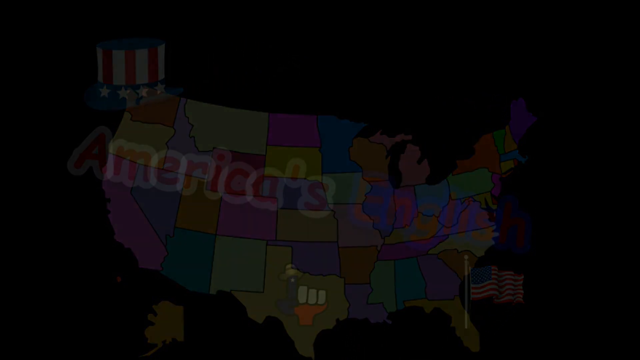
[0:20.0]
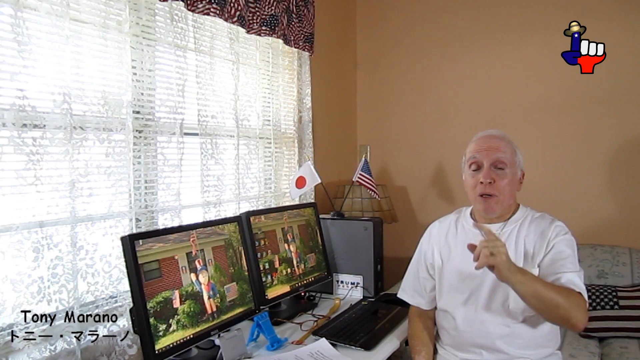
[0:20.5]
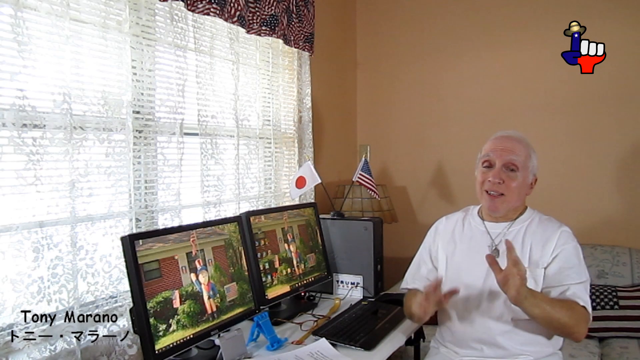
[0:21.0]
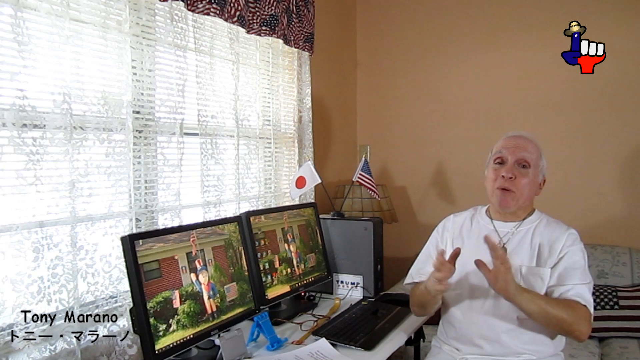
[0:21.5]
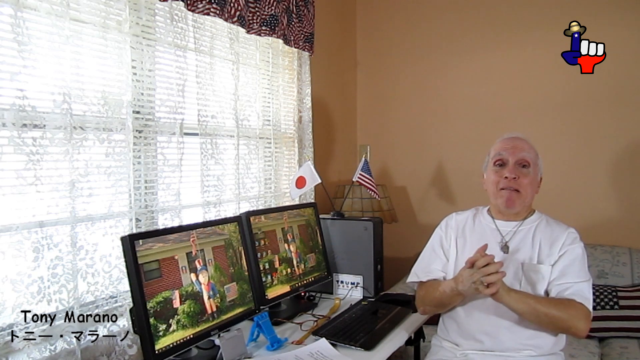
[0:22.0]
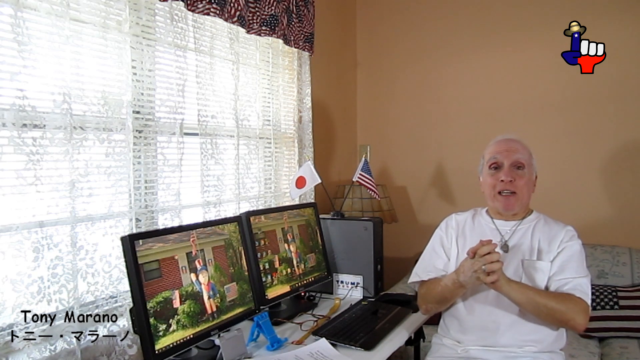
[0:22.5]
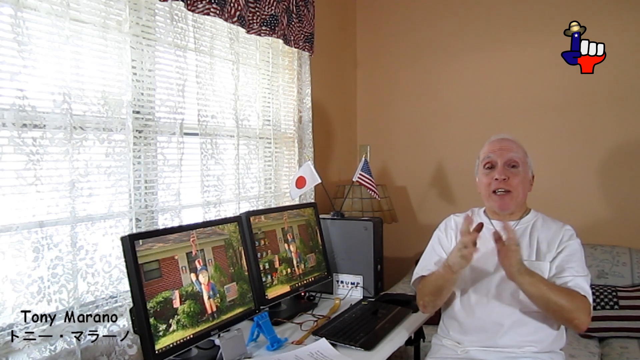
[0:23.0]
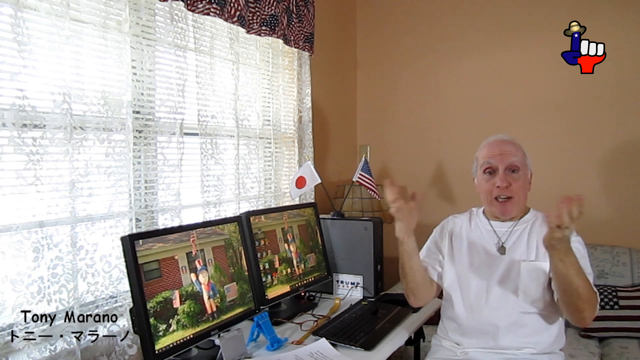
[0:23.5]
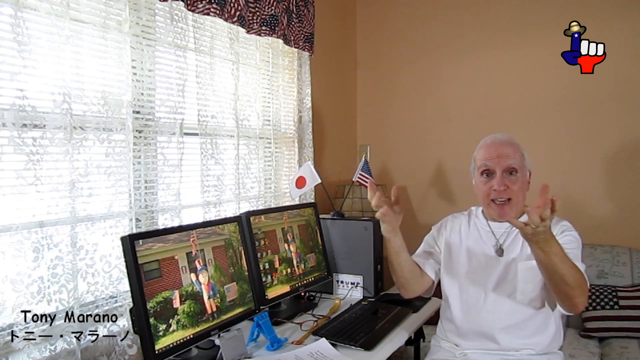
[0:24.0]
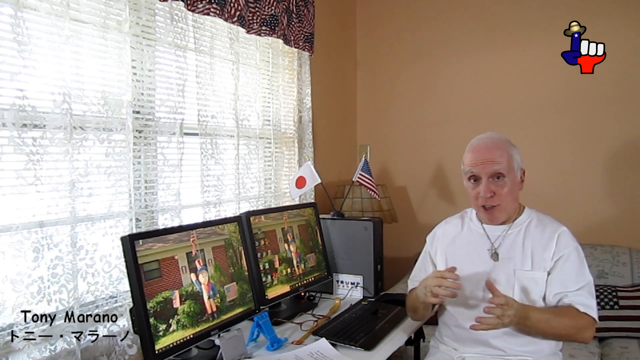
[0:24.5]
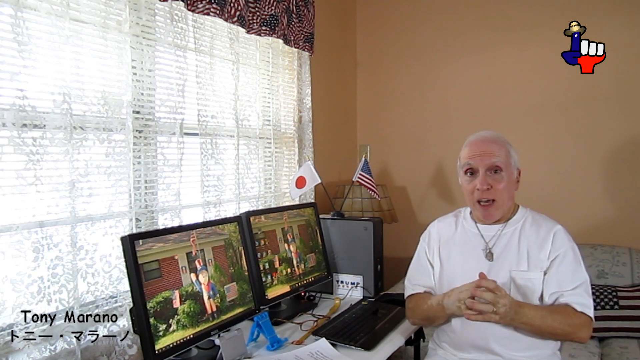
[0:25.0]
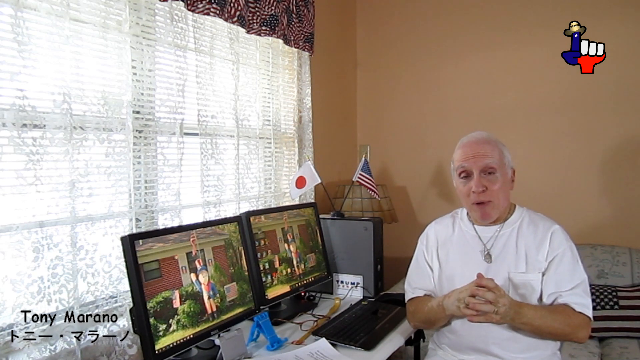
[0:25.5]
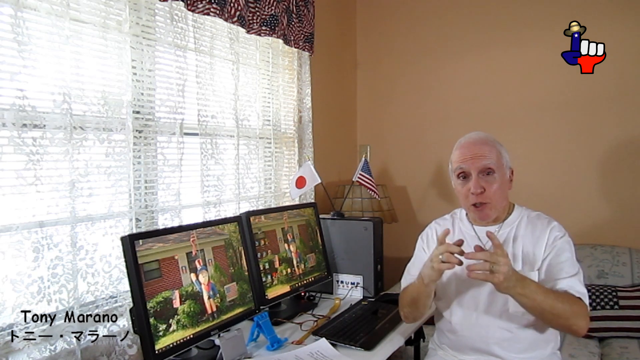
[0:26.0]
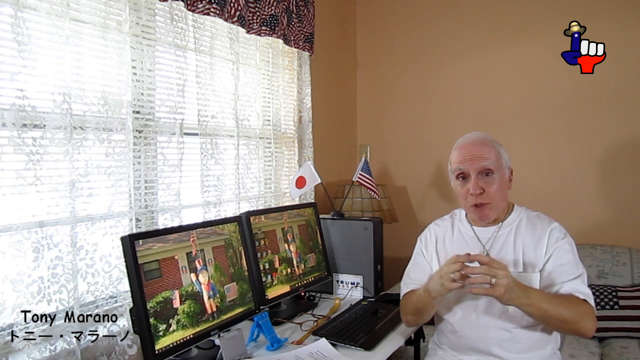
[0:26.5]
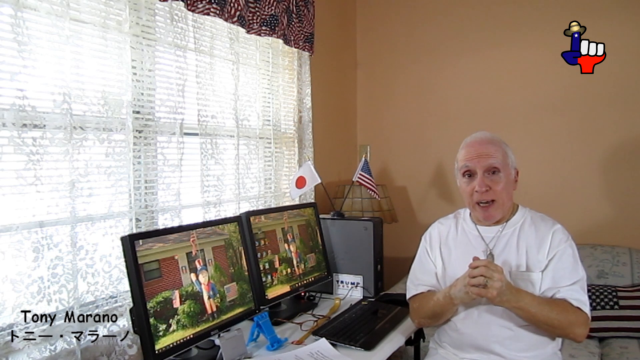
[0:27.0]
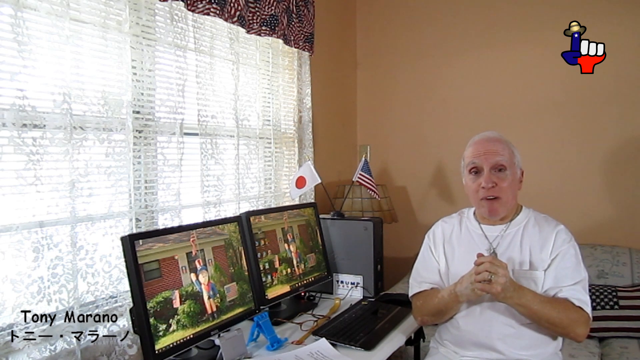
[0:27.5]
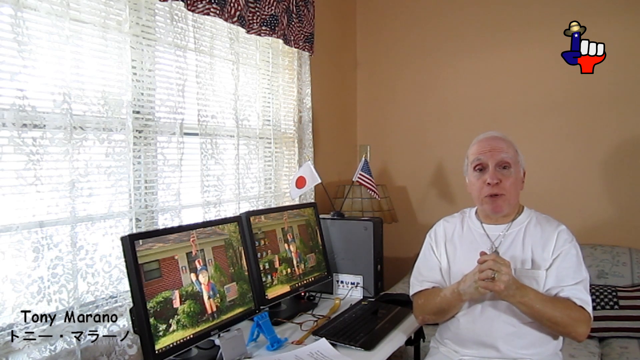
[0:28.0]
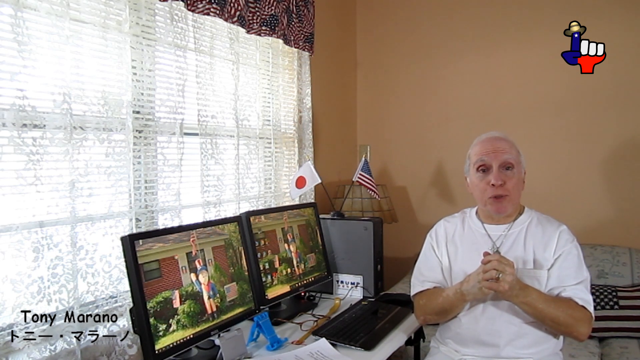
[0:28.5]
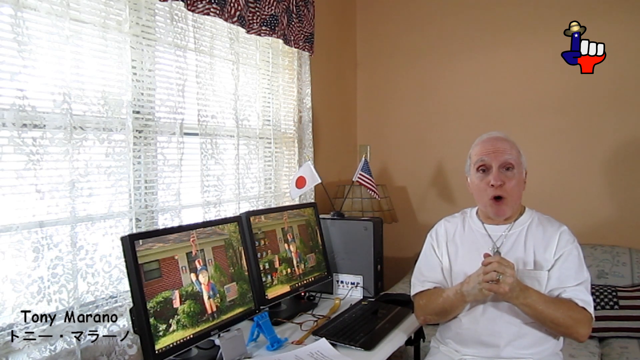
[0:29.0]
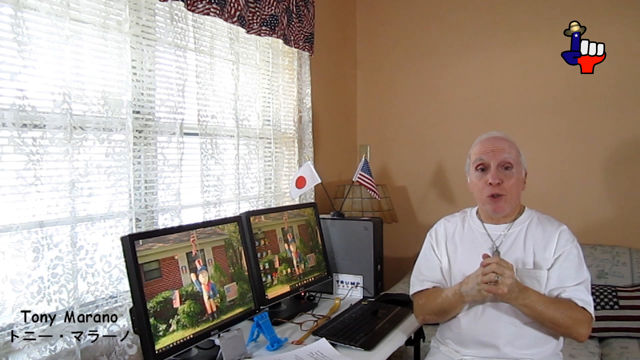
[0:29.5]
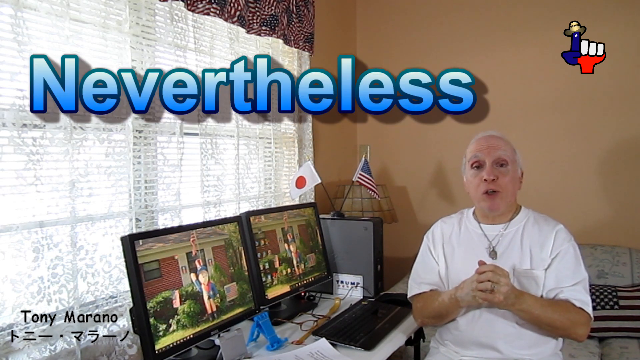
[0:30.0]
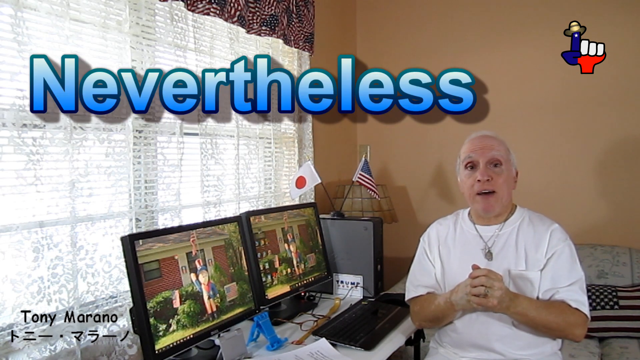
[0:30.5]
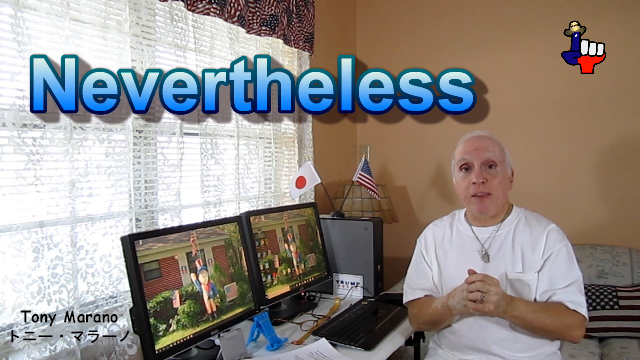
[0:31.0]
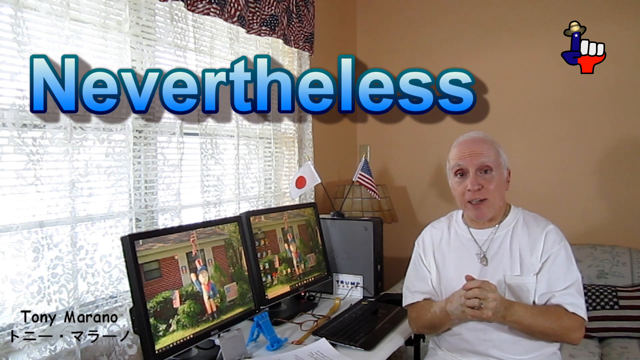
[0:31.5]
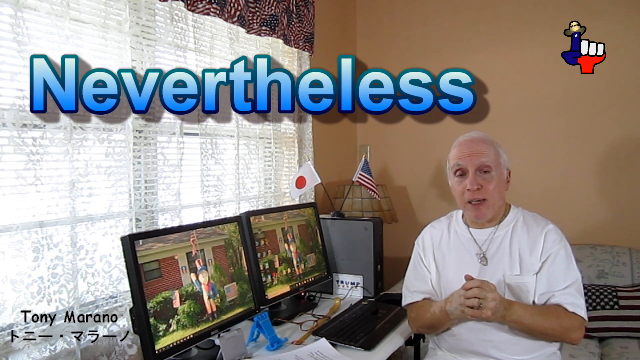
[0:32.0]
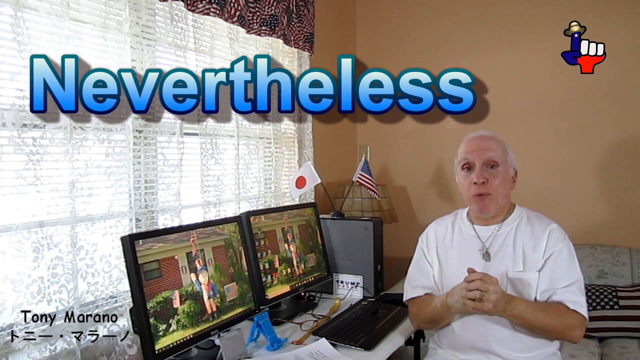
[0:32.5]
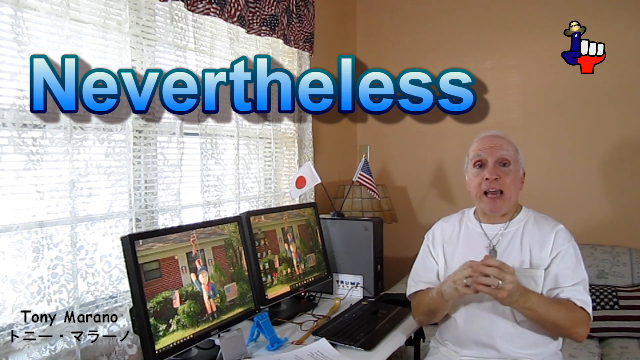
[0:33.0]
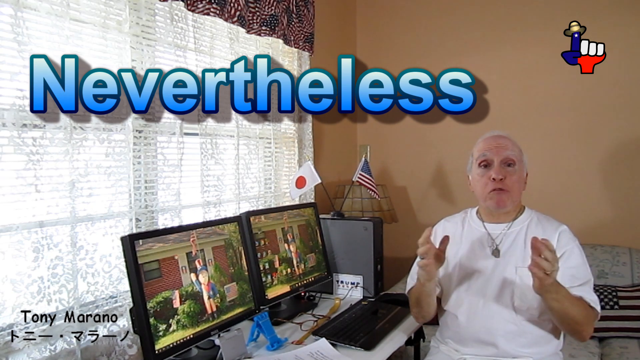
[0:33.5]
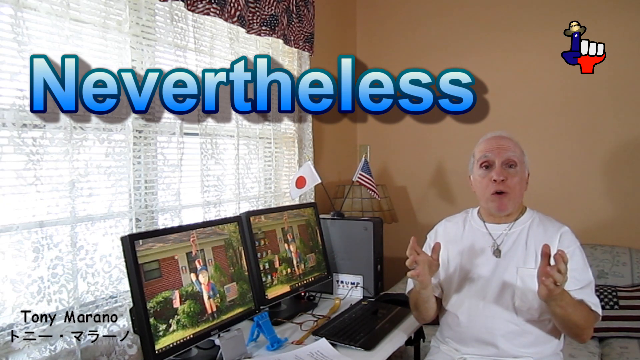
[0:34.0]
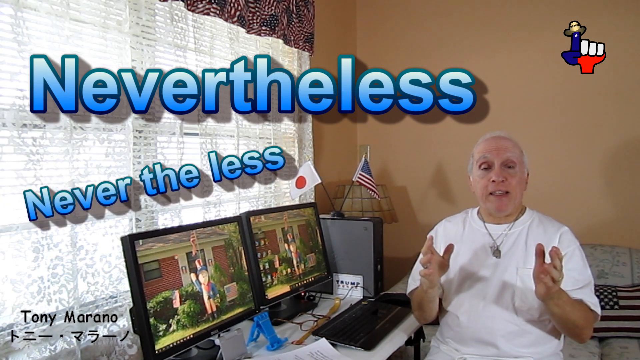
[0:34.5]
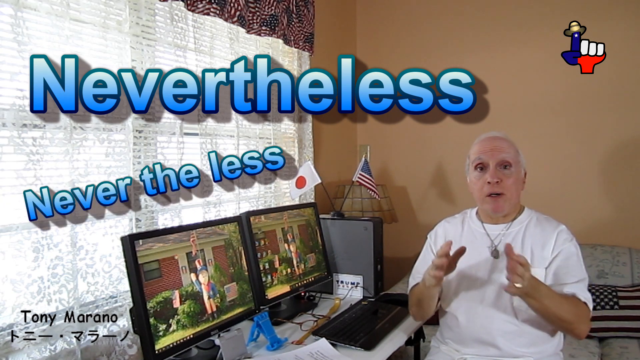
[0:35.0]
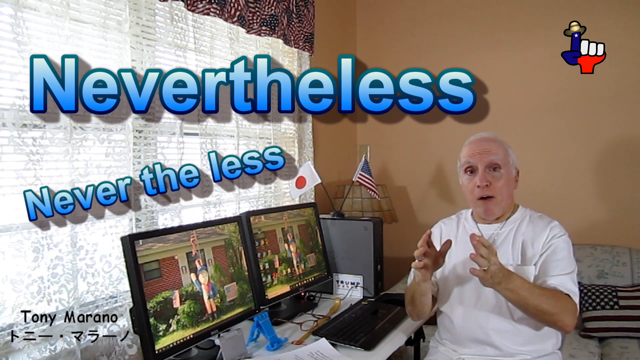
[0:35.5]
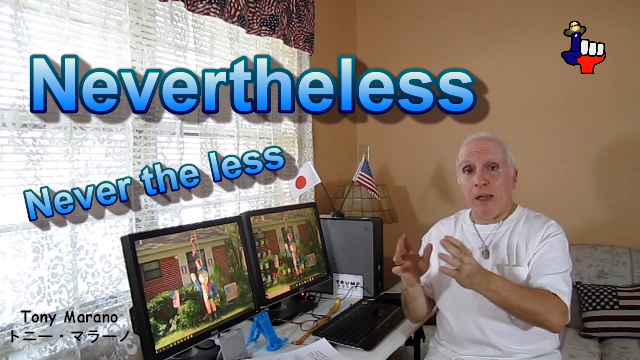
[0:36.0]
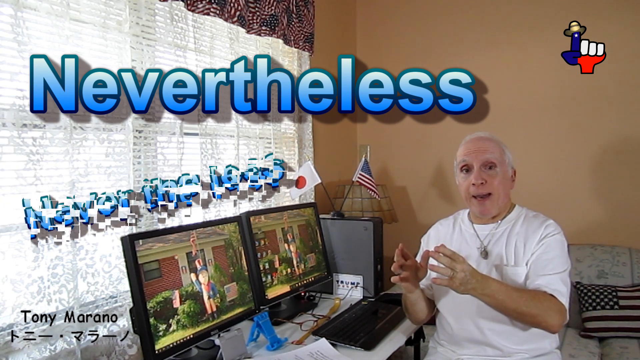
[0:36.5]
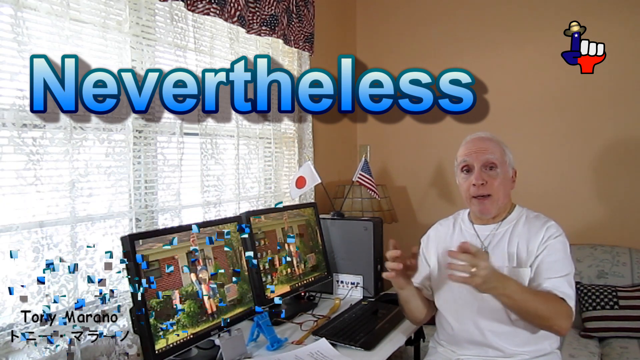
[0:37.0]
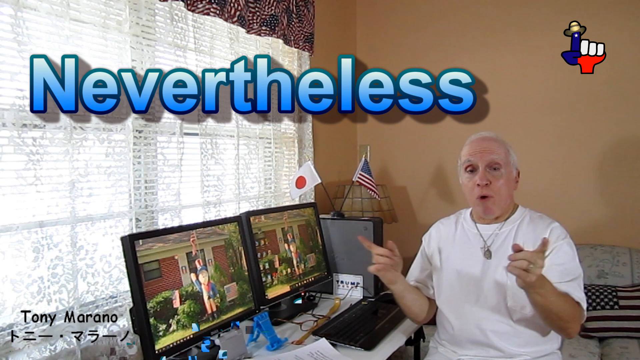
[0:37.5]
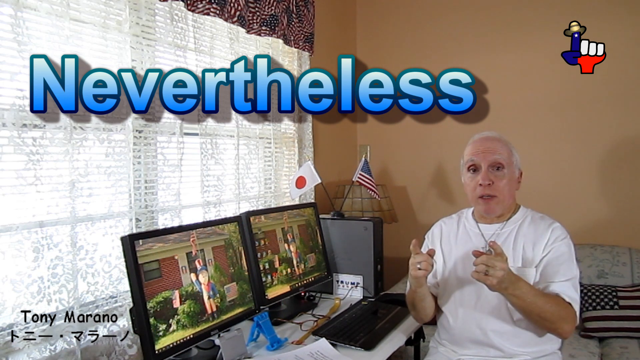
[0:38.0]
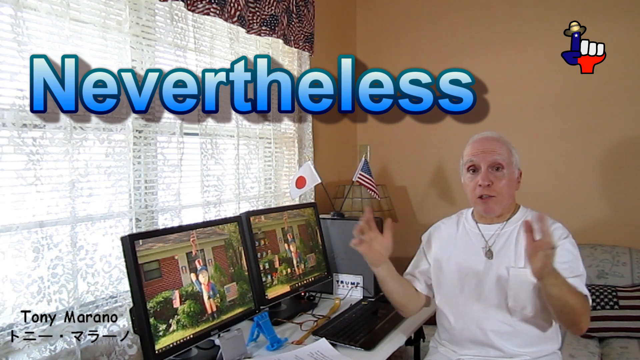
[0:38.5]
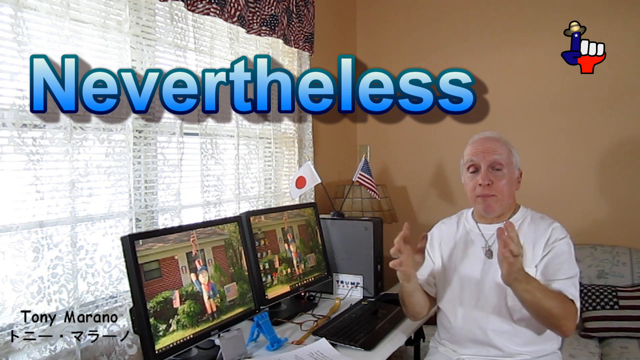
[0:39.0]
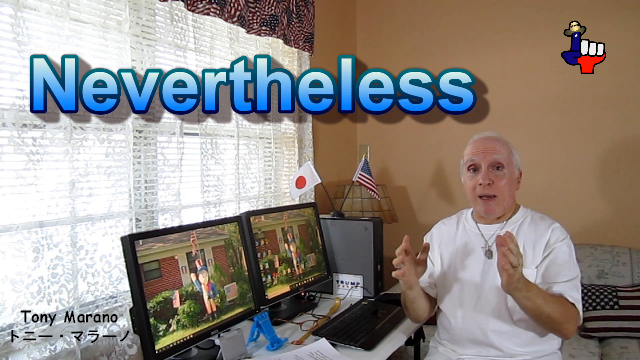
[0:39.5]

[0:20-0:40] On a solid black screen, a map of the United States appears in the middle, each state a different color: California is purple, Texas is yellow, Ohio is blue, Pennsylvania is green, and so on. An Uncle Sam hat, blue with stripes and stars, hangs on the top left corner of the map. A flagpole with a flag hanging from it comes off the bottom of Florida, and across the picture are the words "America's English." The video then cuts to a man with white hair sitting down and speaking directly into the camera. He wears a short-sleeved white shirt and a necklace with a big charm on it. To his right is a white desk with two computer monitors, and a keyboard in front of the monitor closest to him. To the right of the monitors is a computer tower with two small flags on top, an American flag and a Chinese flag. Behind the computers is a large picture window with an opened shade and see-through white curtains covering the whole window. Black text in the bottom left-hand corner reads "Tony Marano." Then the word "nevertheless" appears in blue above him, and another "nevertheless" in blue appears below that one.